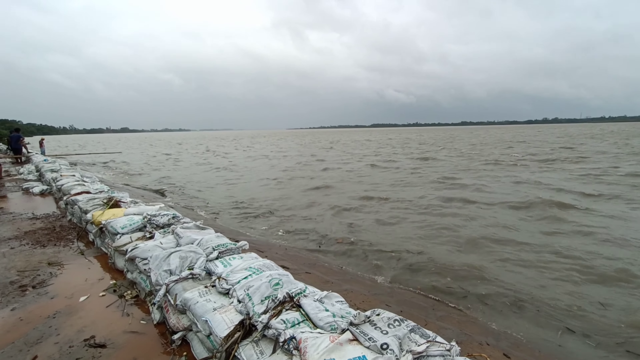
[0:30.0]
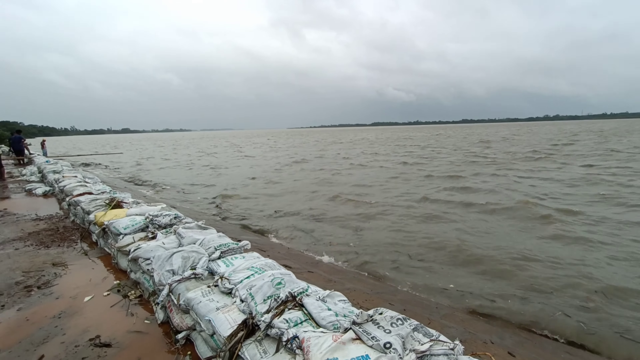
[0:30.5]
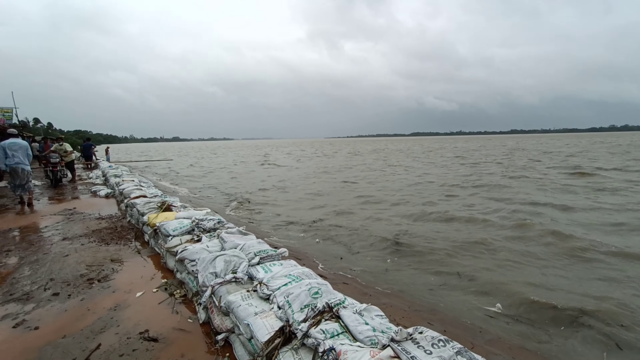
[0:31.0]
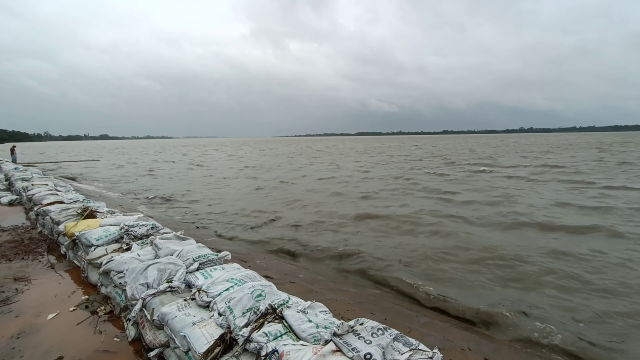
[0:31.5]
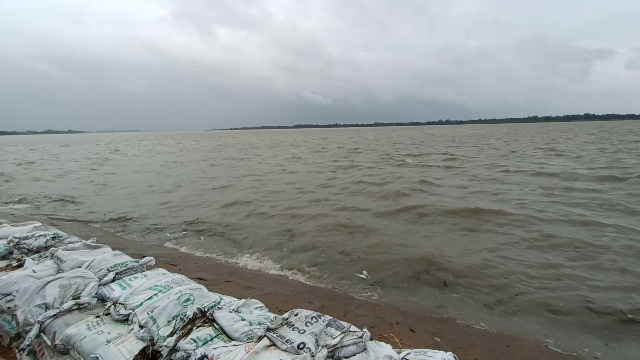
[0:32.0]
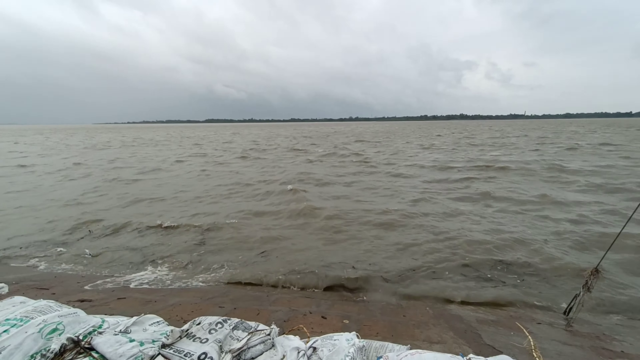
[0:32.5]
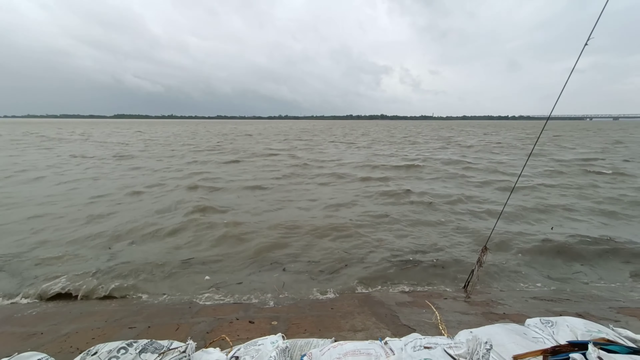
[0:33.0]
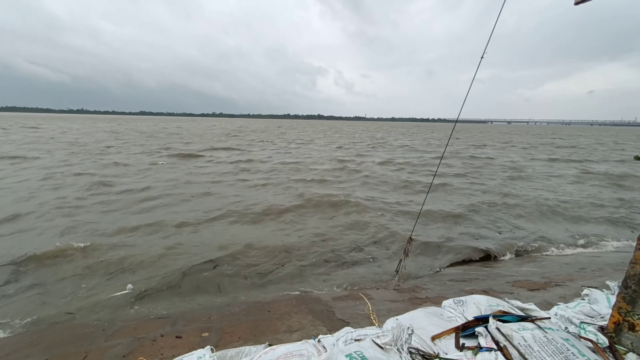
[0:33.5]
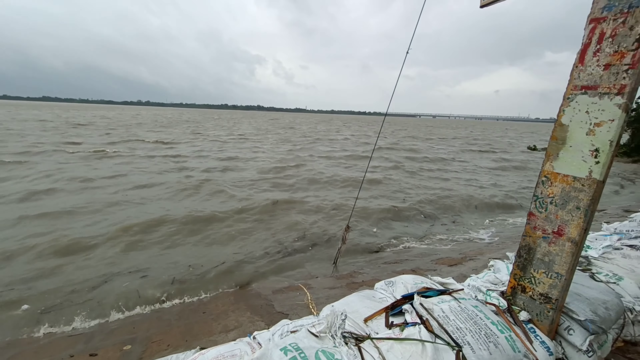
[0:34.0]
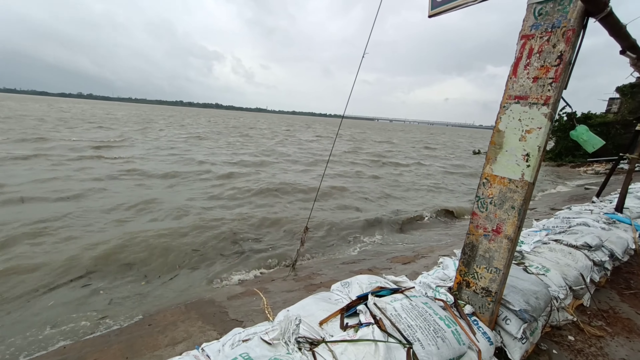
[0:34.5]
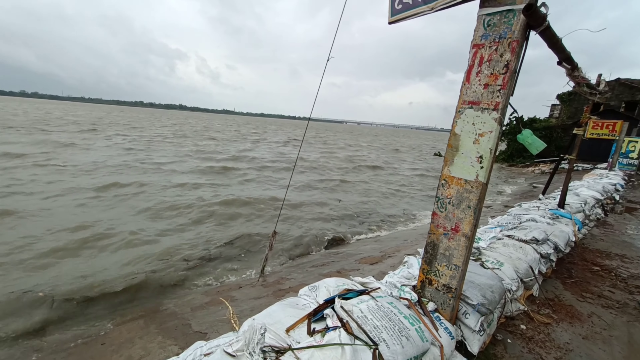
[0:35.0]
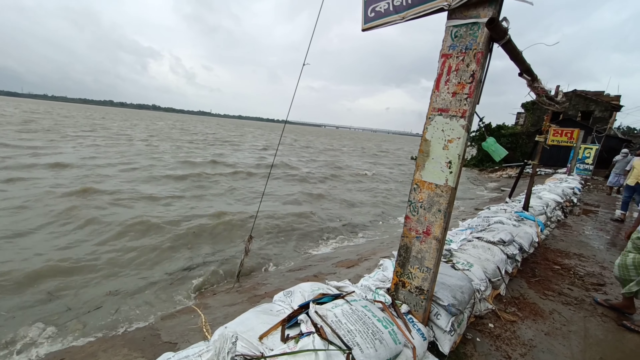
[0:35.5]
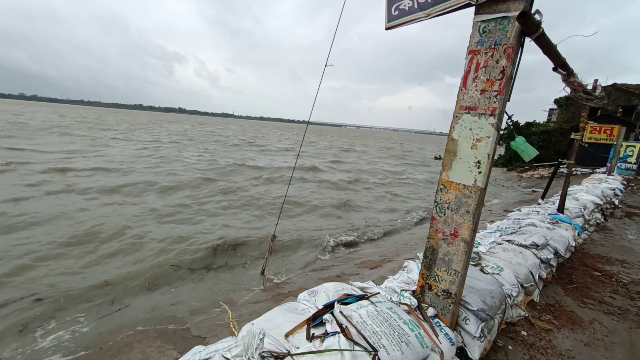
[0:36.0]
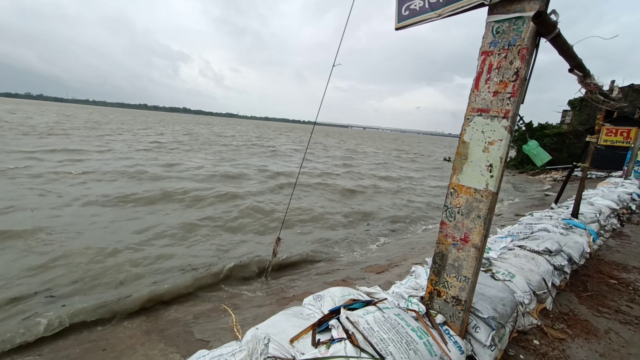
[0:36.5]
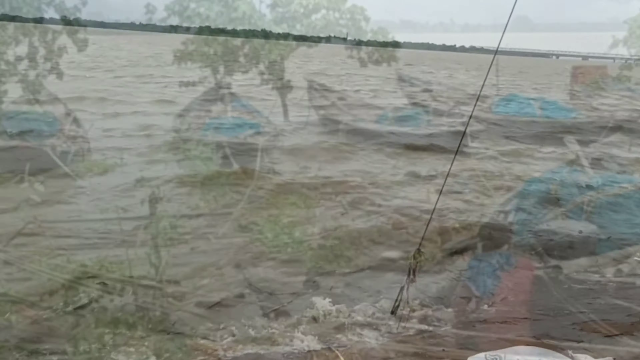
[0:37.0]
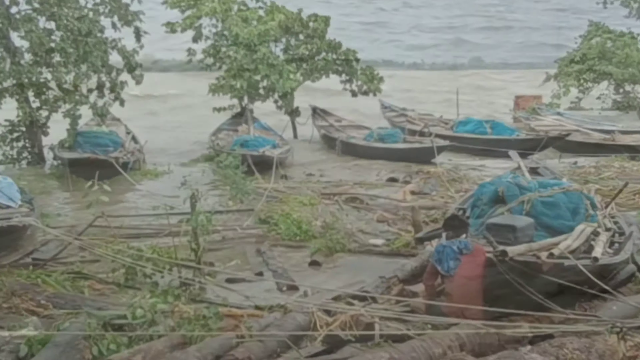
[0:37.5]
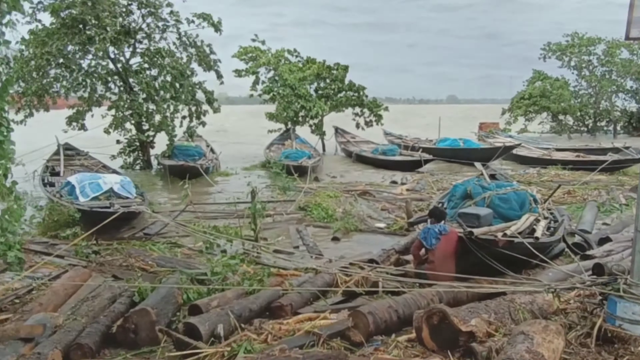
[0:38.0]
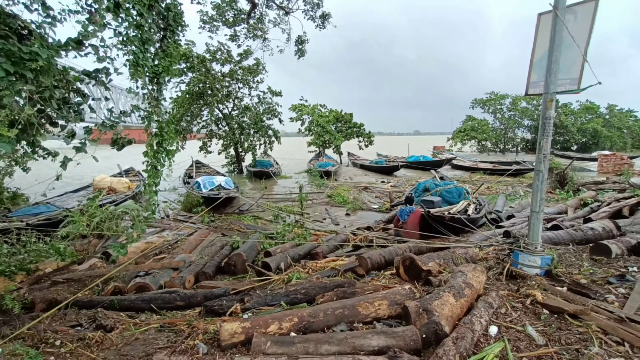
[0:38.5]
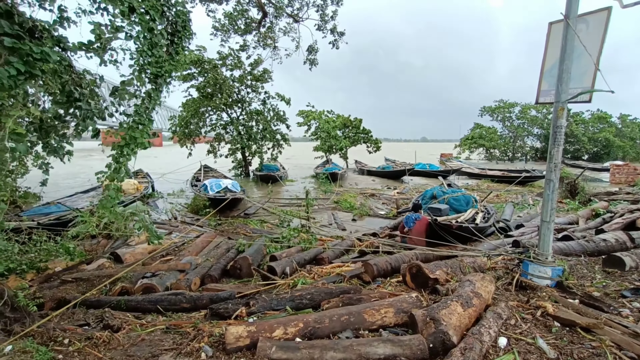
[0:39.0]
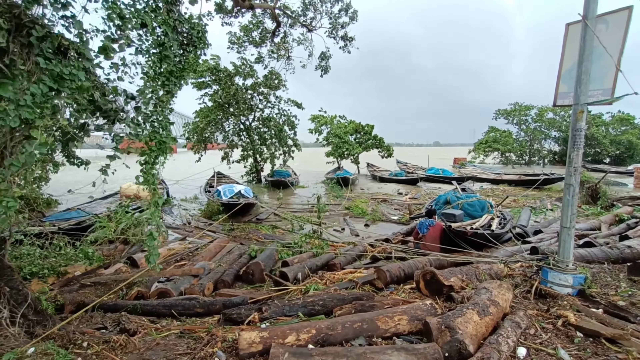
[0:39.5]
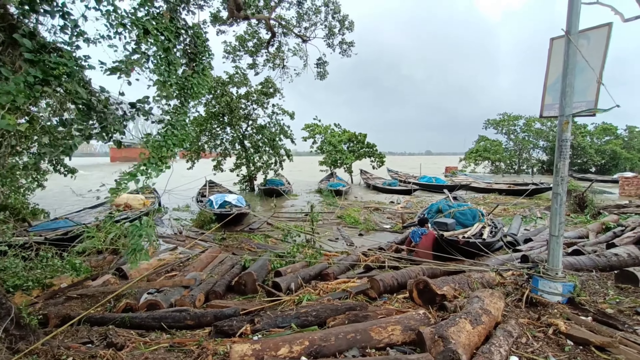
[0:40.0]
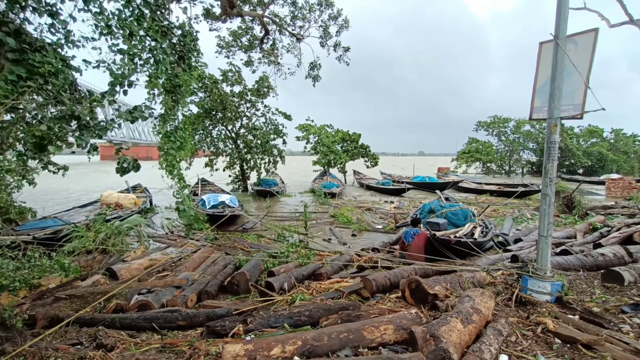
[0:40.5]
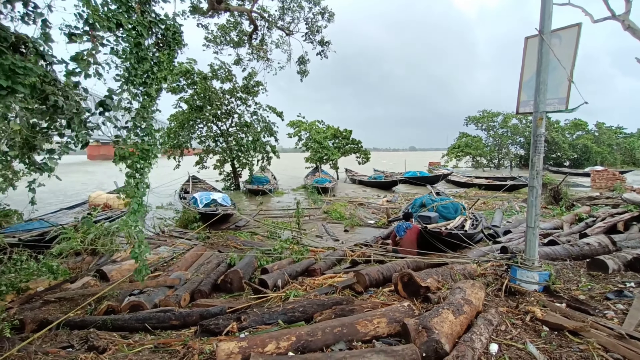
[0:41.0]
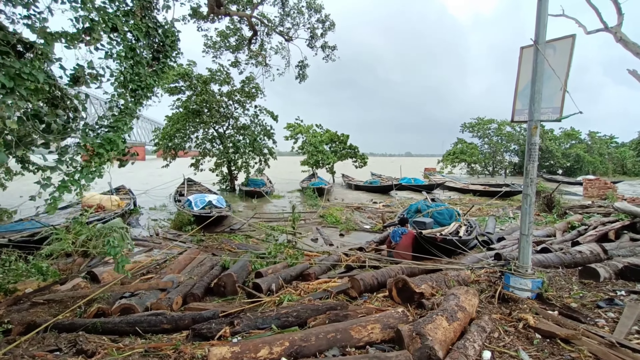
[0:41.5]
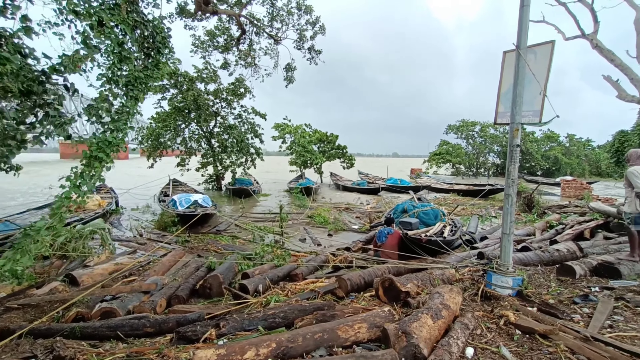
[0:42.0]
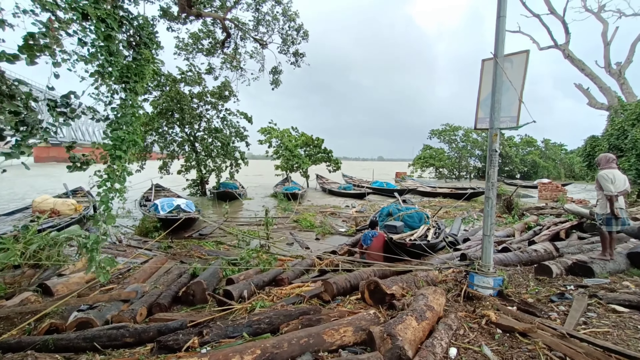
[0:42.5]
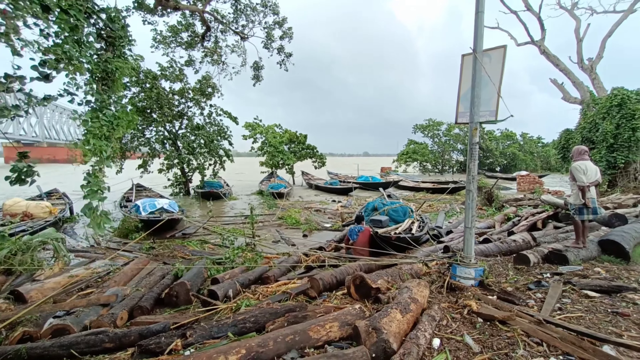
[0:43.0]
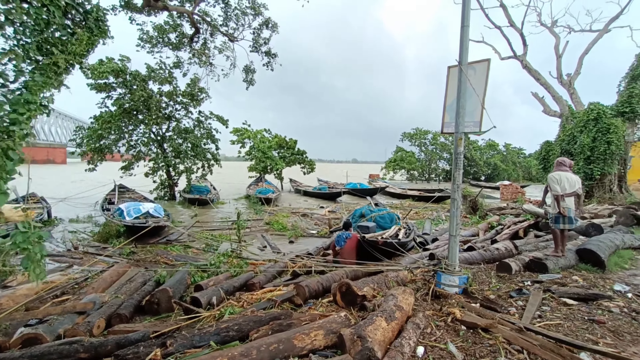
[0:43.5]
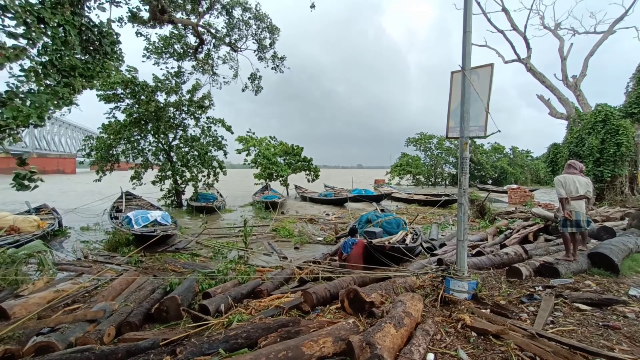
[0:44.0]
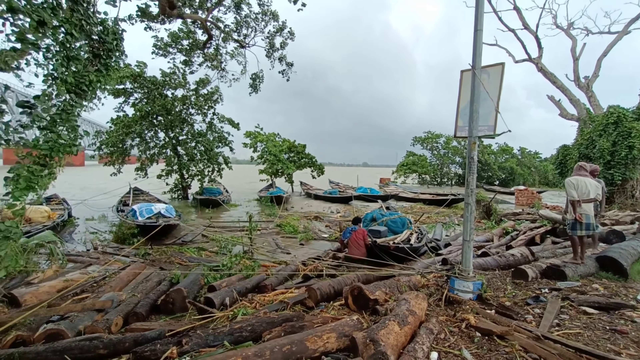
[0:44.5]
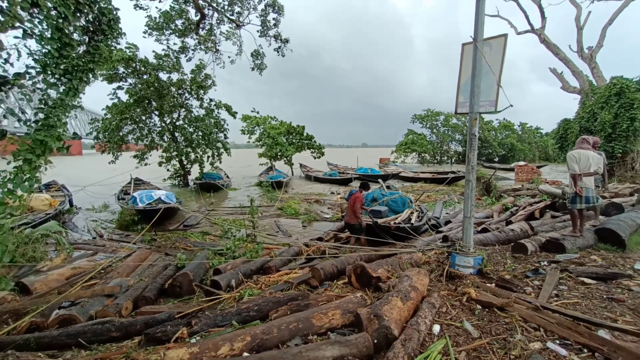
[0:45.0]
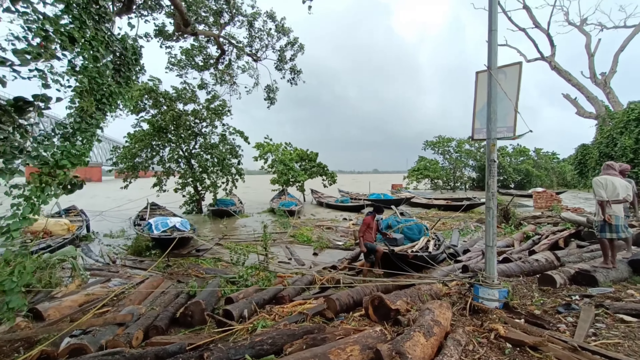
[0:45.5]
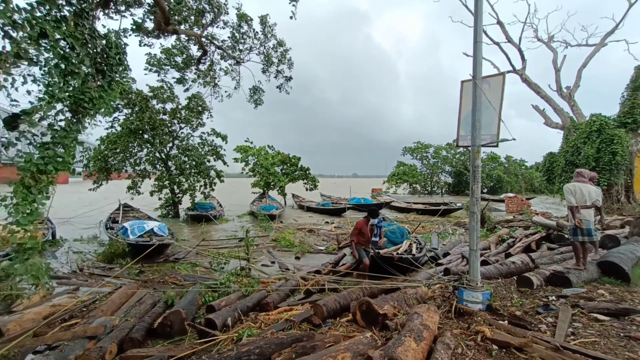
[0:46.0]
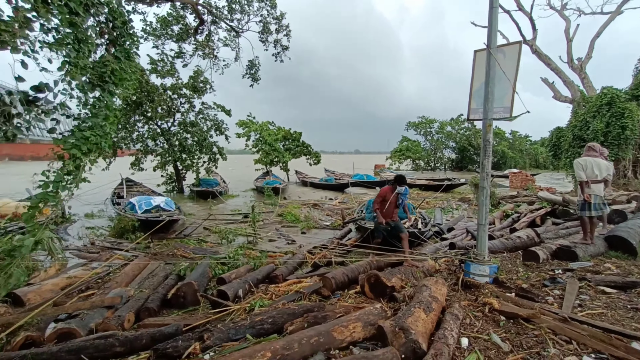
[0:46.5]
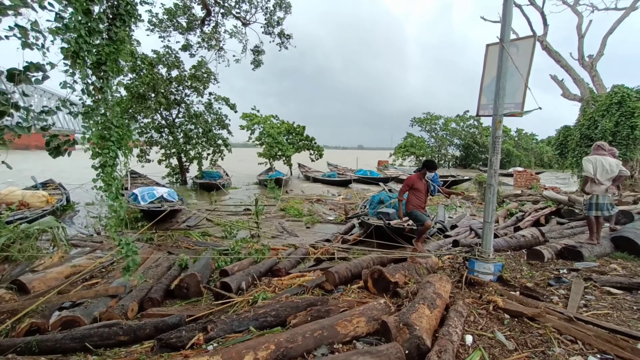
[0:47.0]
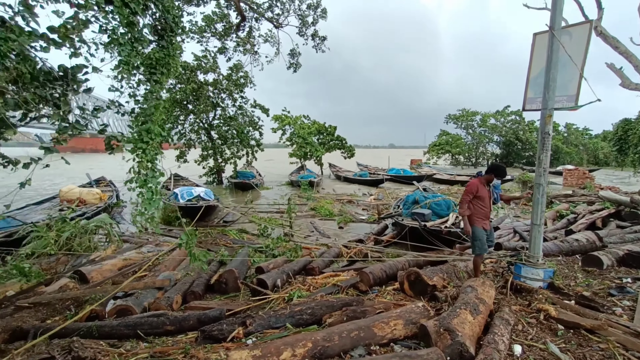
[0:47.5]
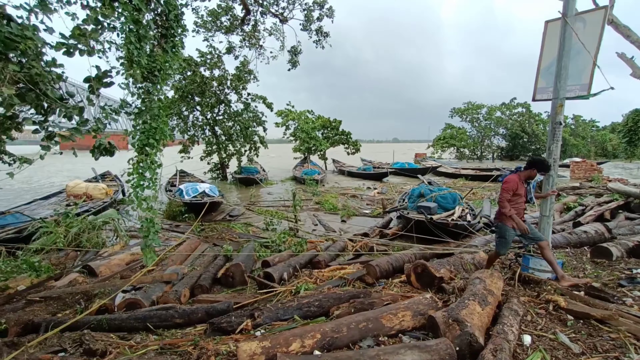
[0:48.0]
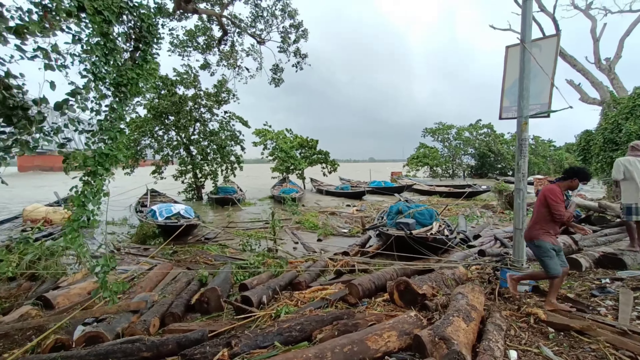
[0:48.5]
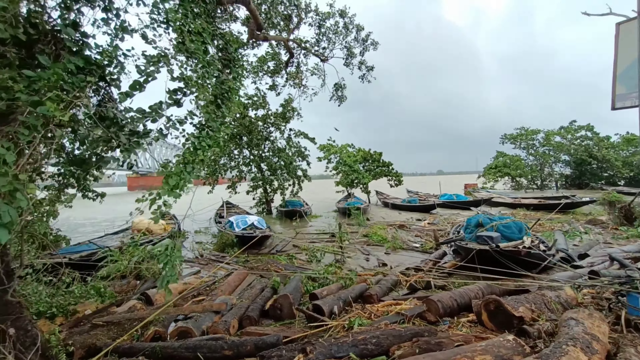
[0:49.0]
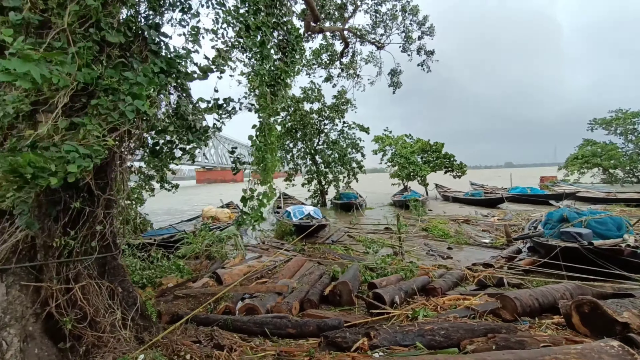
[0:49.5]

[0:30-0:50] Water rushes toward the shore, not too fast but enough to show that there is a lot of wind. Several boats are lined up at a dock, apparently ready for people to evacuate, and the boats rumble as the wind picks up speed. Other people stand alongside the person recording; they seem to be people who live in the village rather than relatives of the person recording. They include a little boy, a teenager and an older man, who look around, apparently making sure the boats stay safe or monitoring the weather.